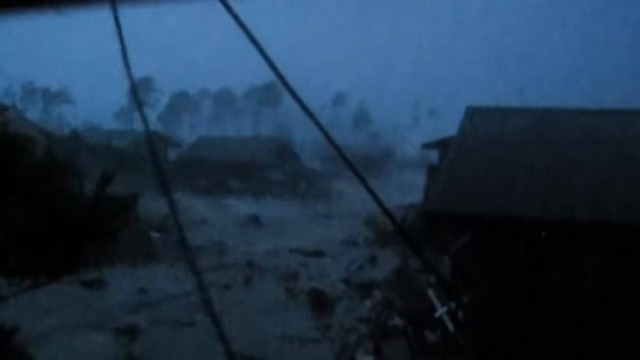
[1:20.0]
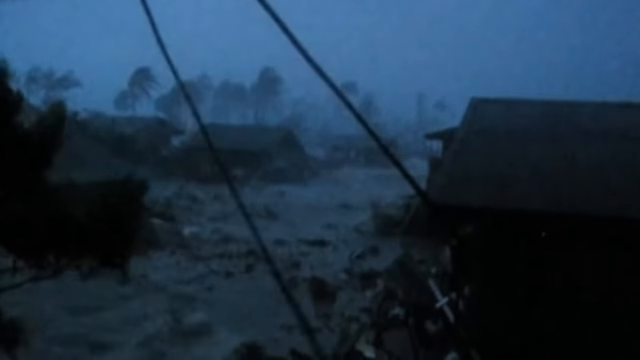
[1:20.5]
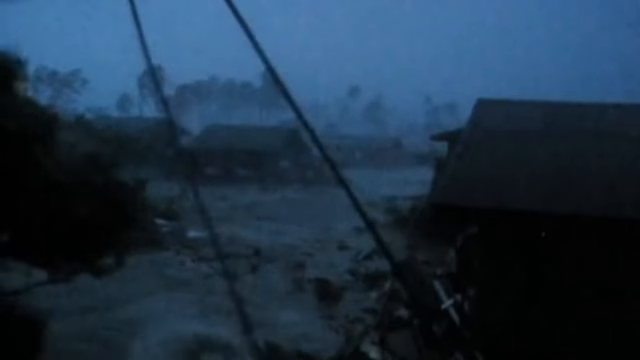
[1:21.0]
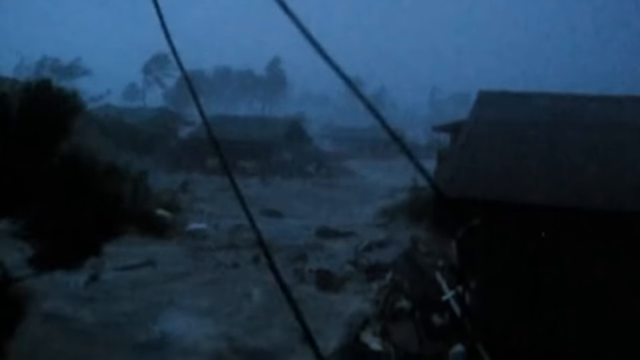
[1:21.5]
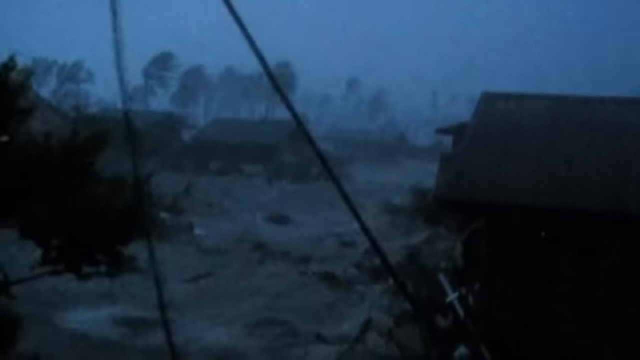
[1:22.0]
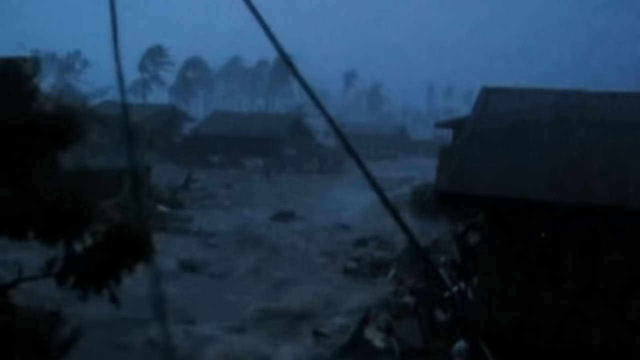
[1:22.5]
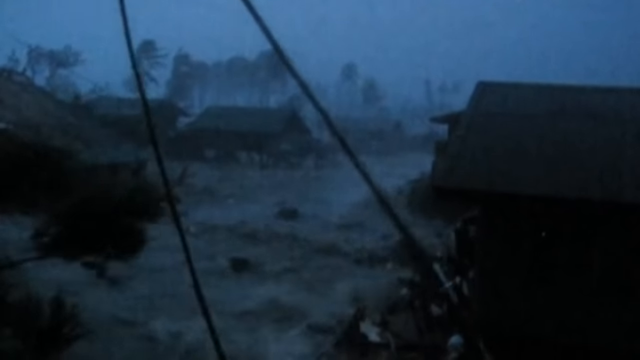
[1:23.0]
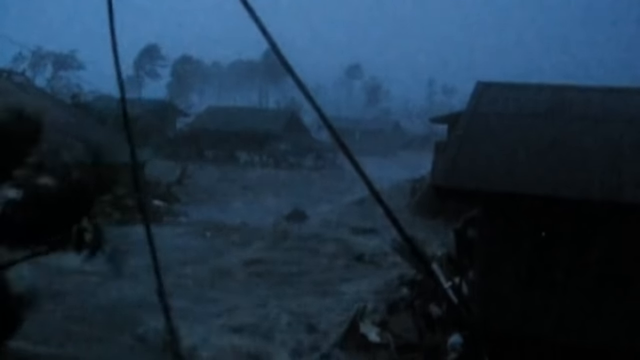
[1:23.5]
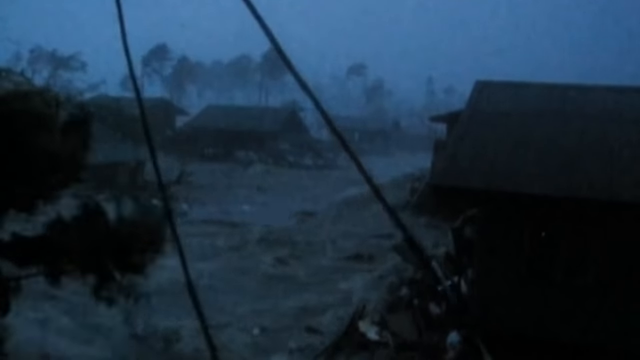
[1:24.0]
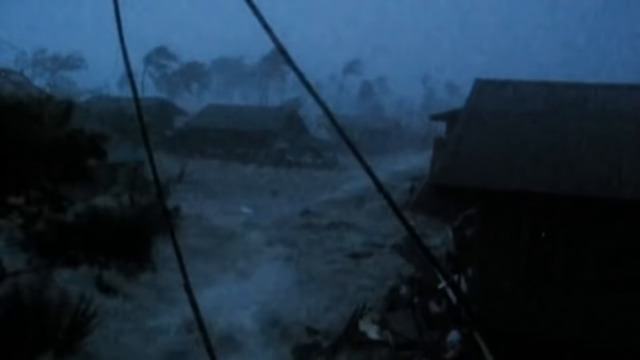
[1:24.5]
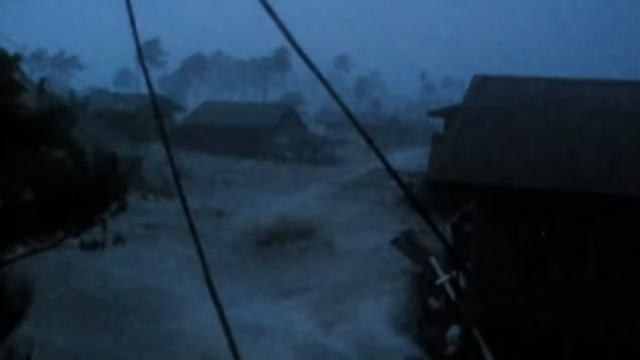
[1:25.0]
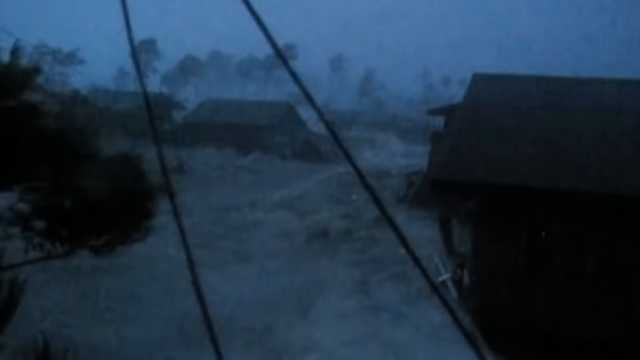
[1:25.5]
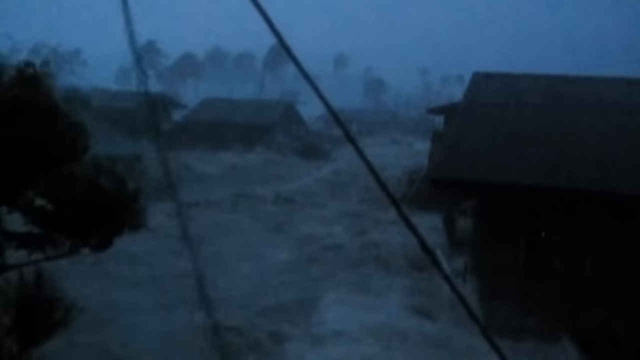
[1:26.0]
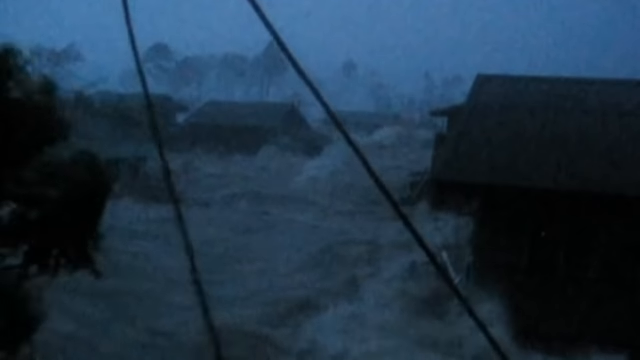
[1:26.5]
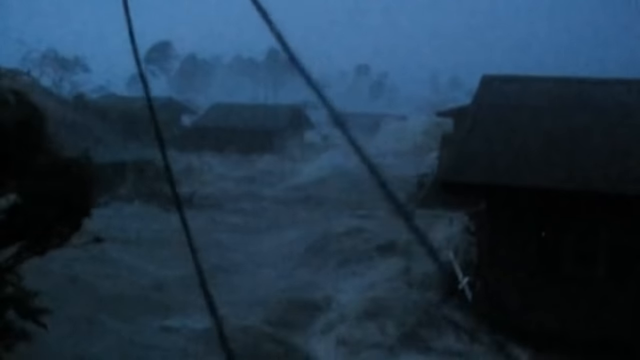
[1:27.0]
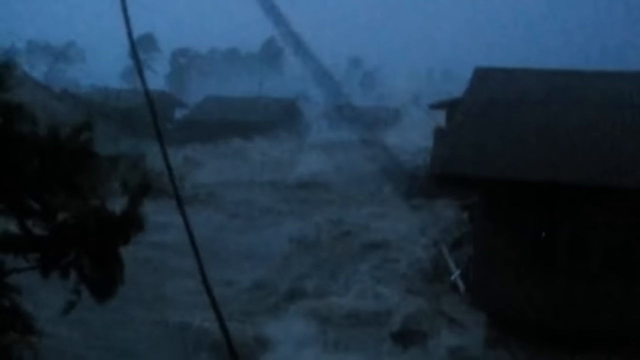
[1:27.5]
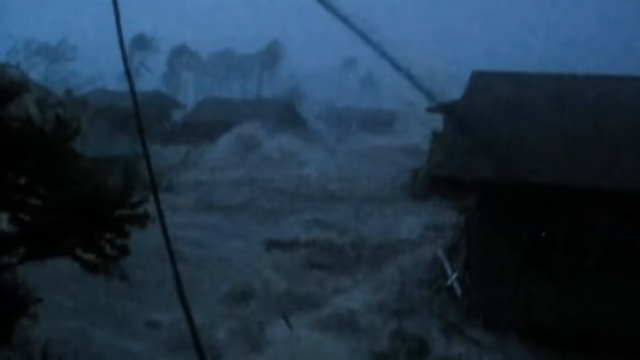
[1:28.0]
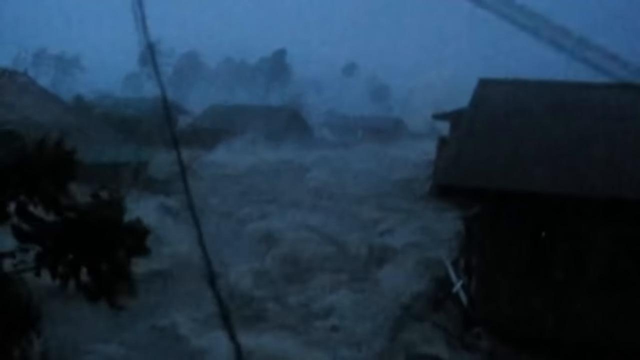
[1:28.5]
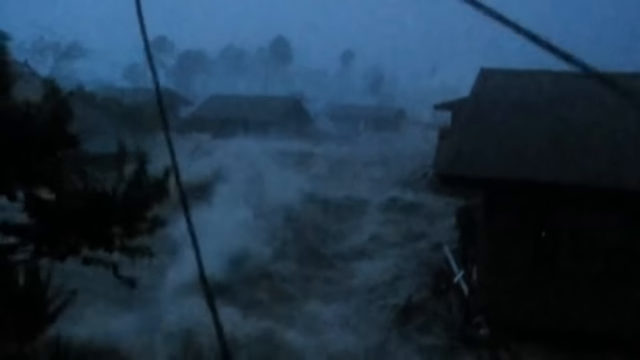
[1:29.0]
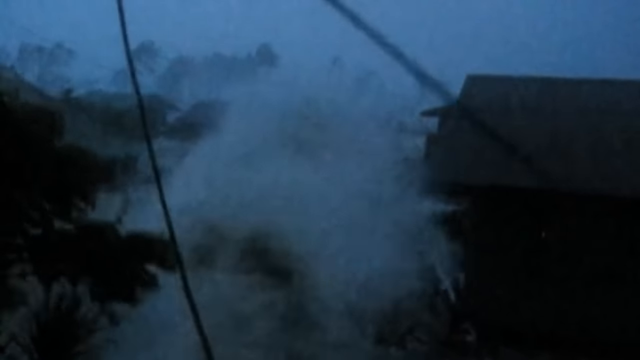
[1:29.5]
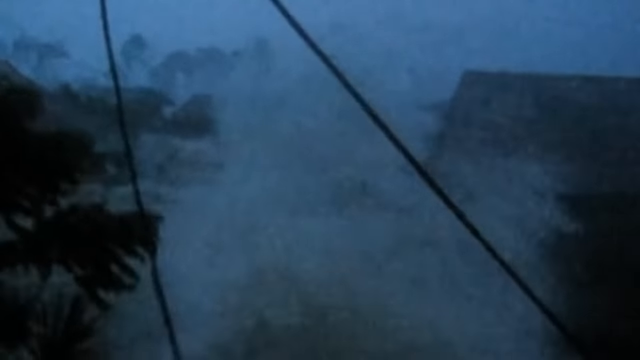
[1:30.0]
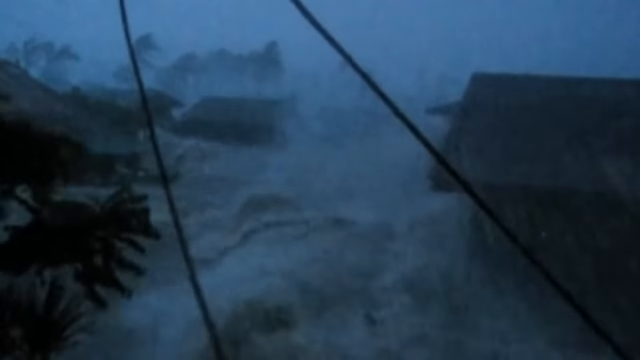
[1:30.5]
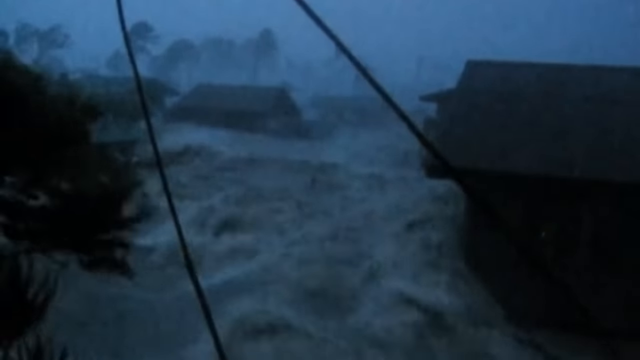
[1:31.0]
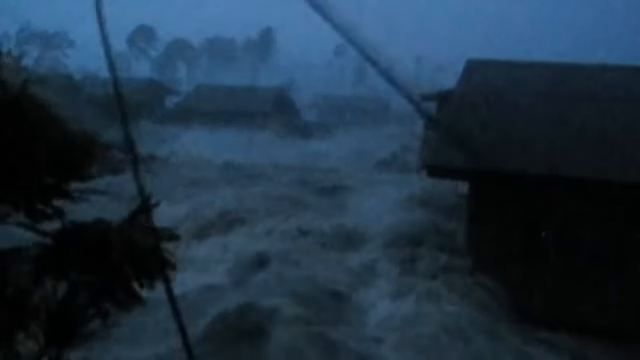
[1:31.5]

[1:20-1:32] The strongest surge of the storm arrives. The water runs at a very high speed, splashing over the roofs of the houses. Only the tallest trees are easily noticeable. Something that looks like an electric wire is visible, and the electric poles or electric boxes are destroyed. It looks very dark, even in the houses.